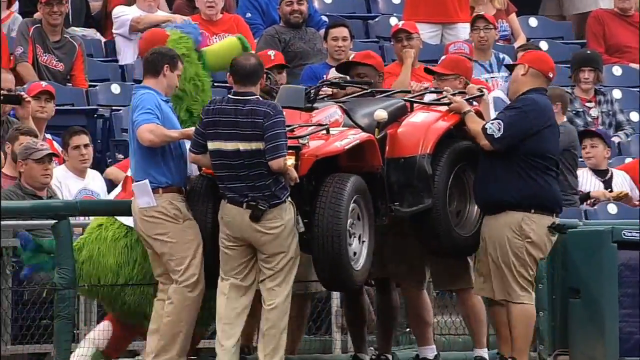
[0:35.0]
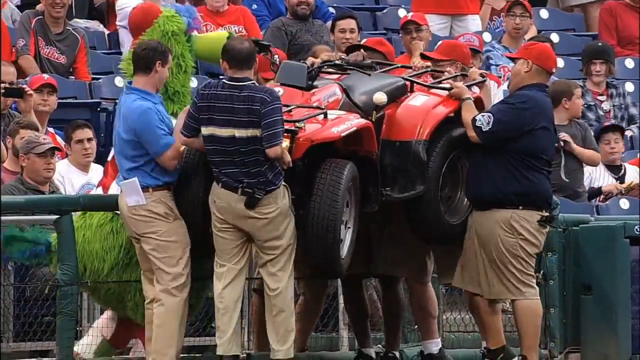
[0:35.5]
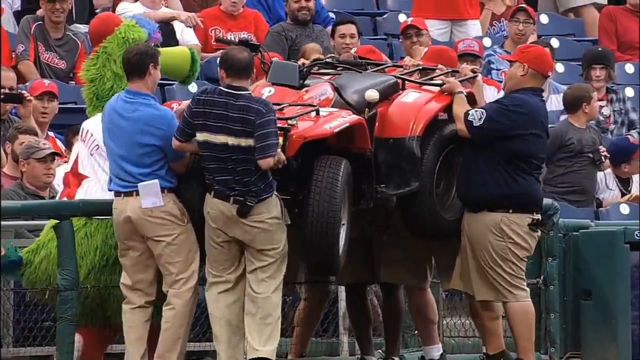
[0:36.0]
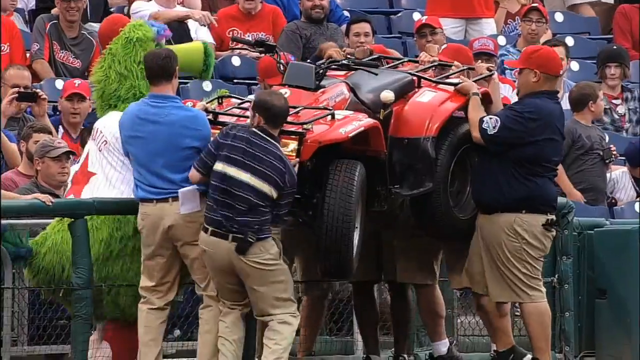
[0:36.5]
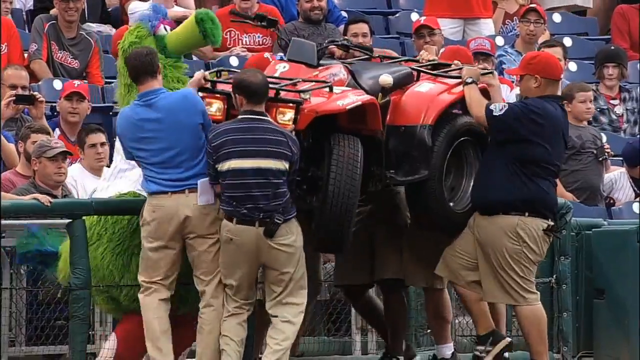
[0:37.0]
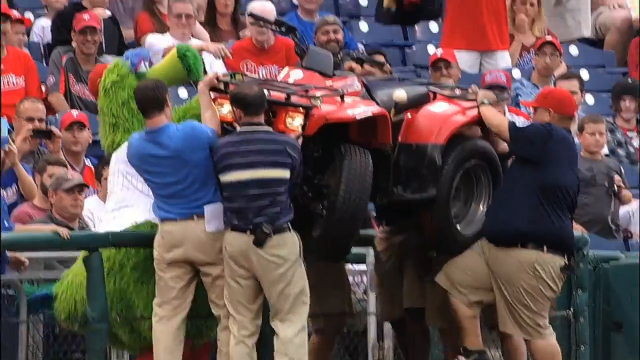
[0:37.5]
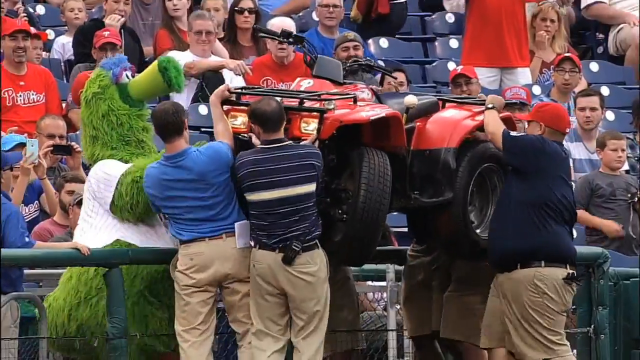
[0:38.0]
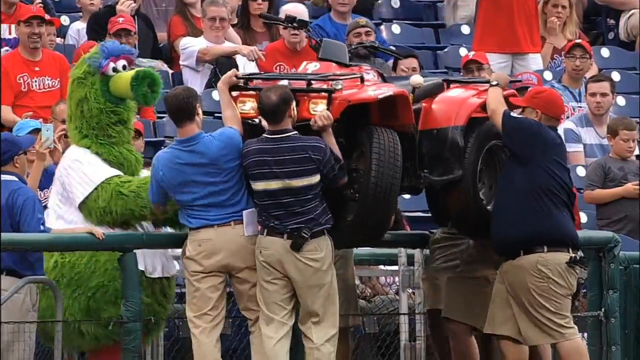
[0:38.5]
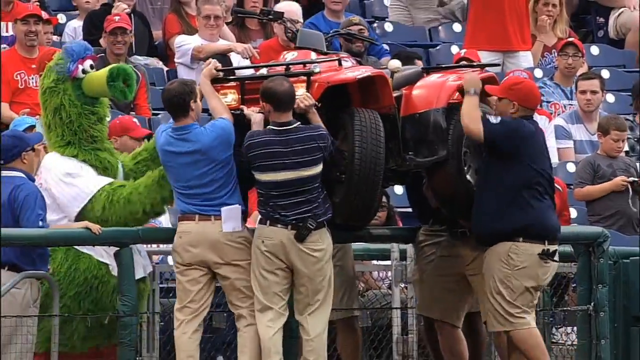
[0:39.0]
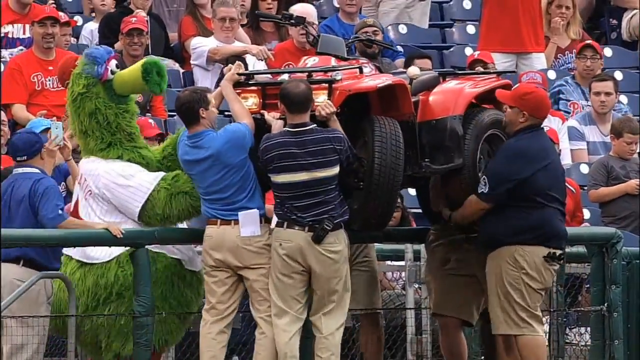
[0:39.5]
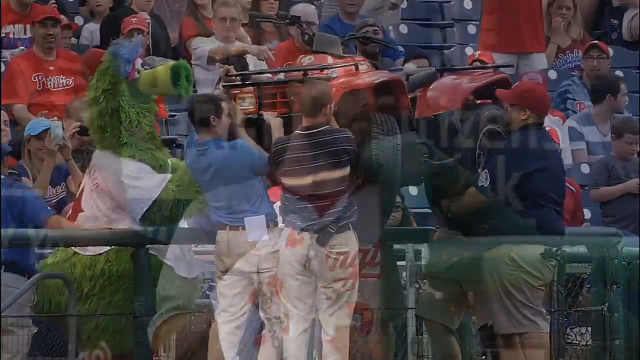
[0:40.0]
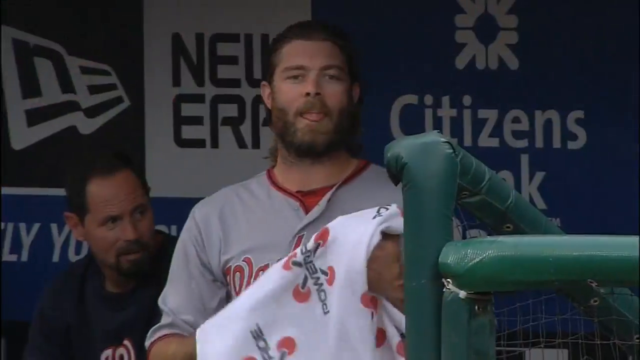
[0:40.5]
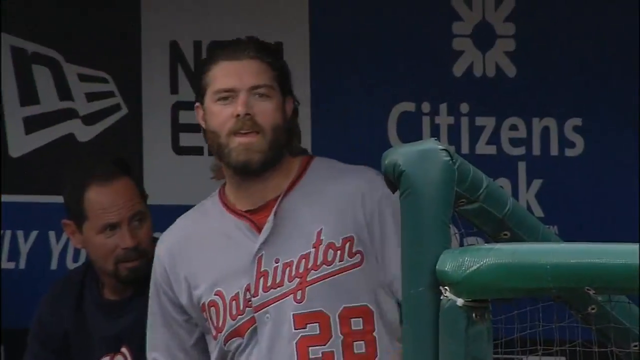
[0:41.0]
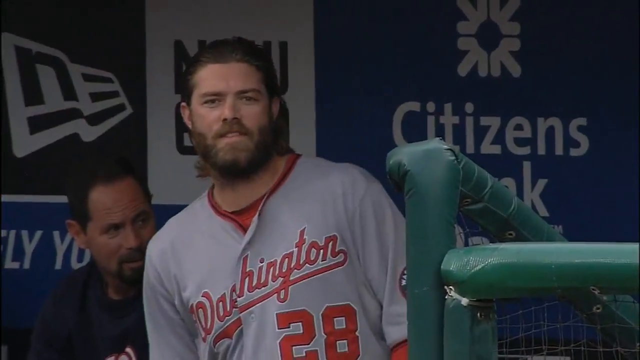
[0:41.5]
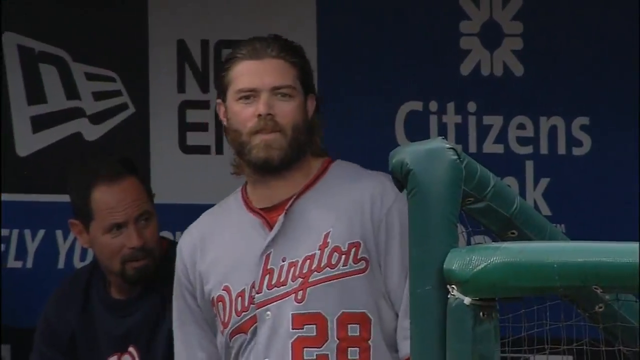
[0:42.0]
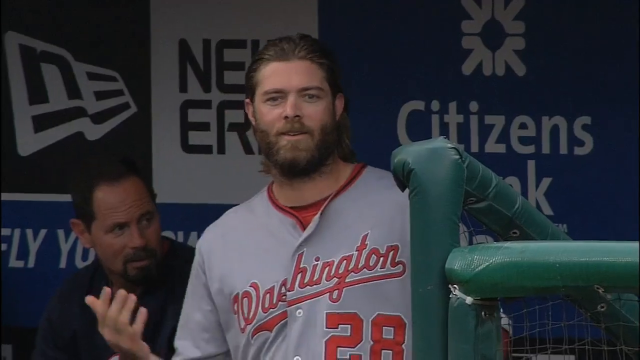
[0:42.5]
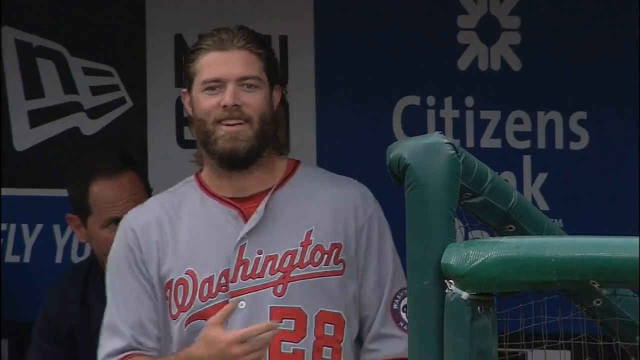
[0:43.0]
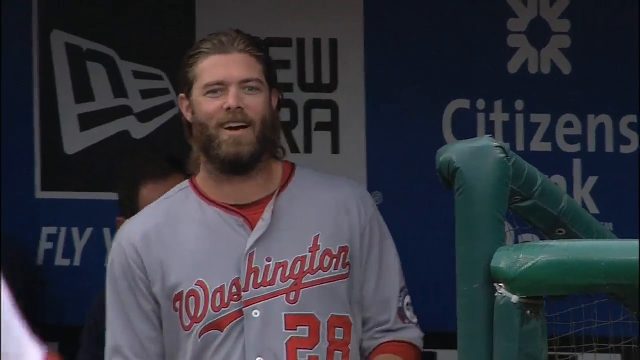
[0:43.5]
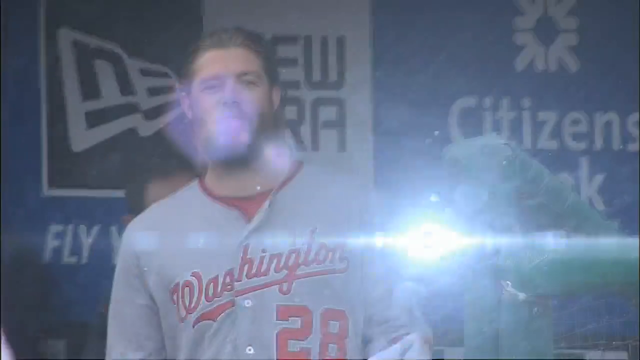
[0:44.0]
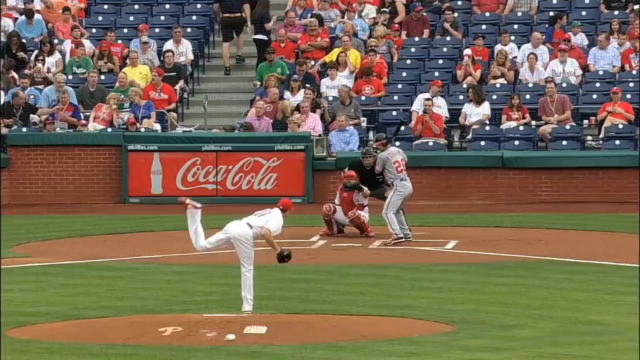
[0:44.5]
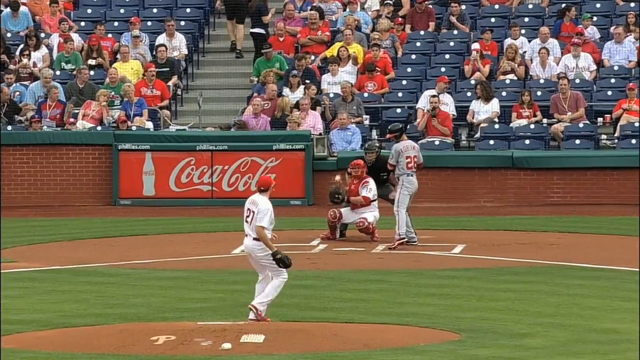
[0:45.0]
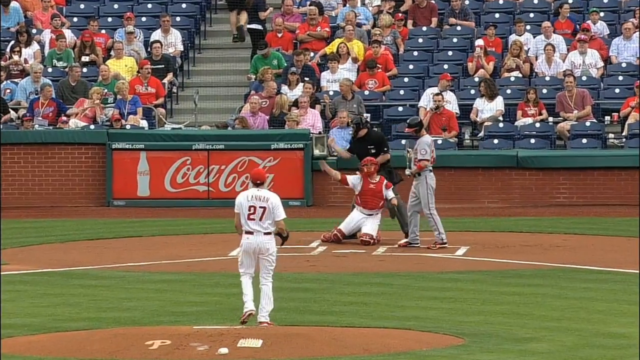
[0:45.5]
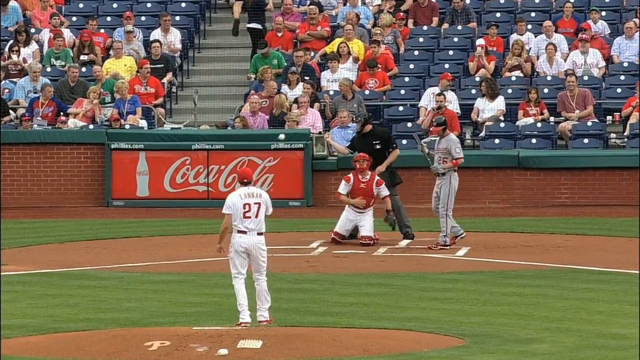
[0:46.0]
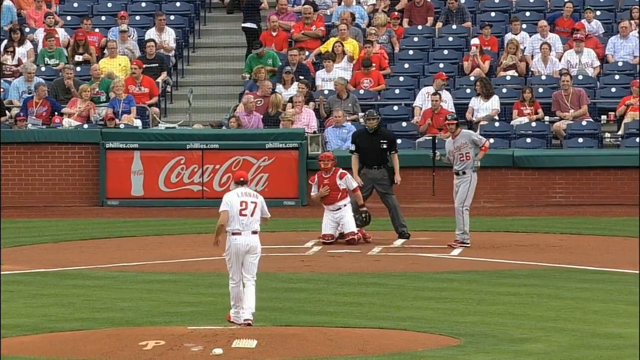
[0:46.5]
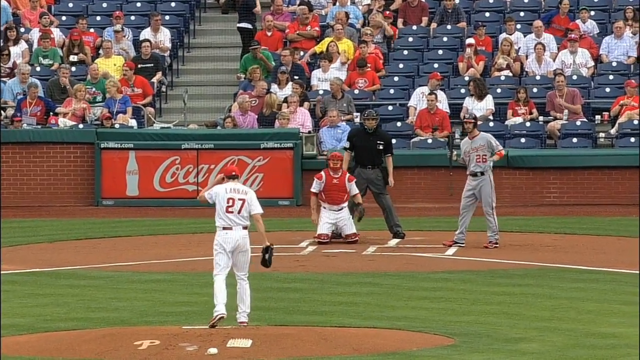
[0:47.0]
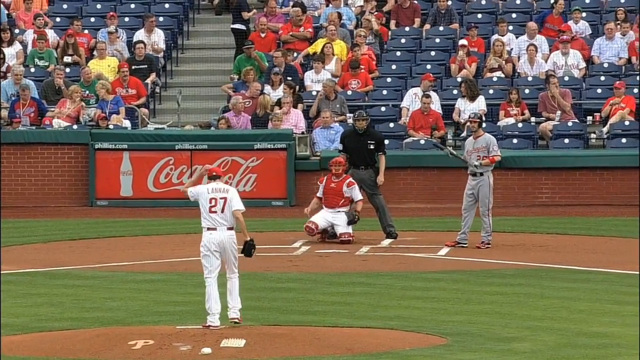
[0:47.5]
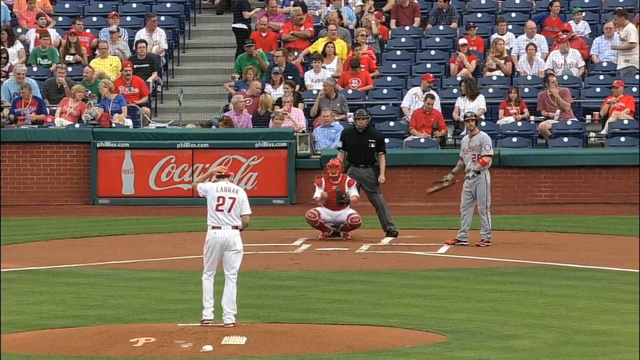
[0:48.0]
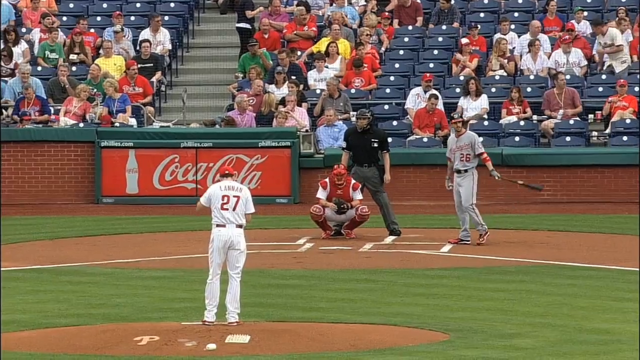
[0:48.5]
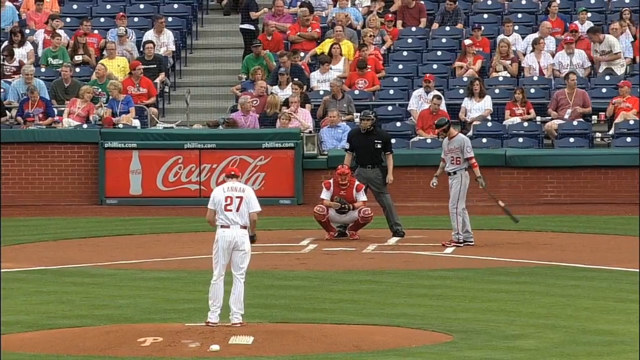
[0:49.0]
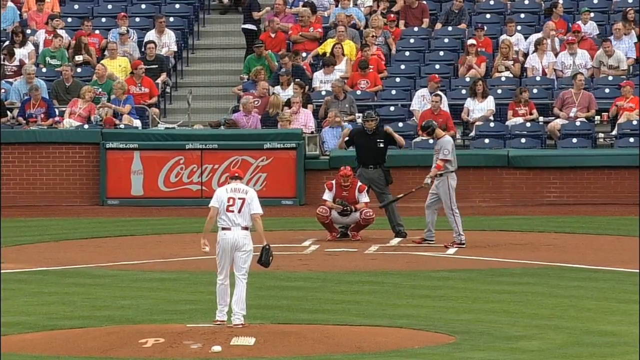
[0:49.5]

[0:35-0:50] About six staff members, apparently field workers, plus the mascot carry the heavy red four-wheeler off the field, lifting it over the gate. The Washington team is in the dugout, apparently complaining a little about the delay, and number 28 of the Washington Nationals has a towel in his hand. The game then appears to begin, with the Phillies pitching and the Washington Nationals at bat, apparently in the first inning. The Phillies pitcher, number 27, throws a pitch that looks like a strike, possibly a ball; the batter does not swing at it.